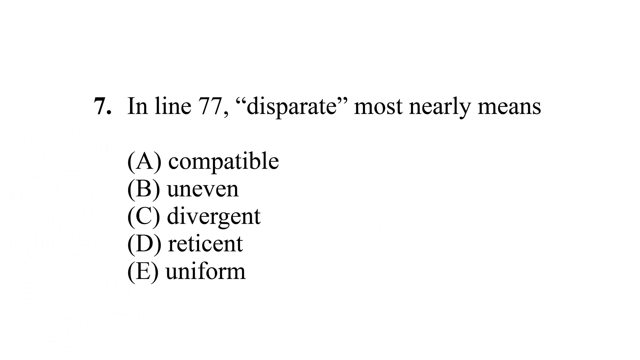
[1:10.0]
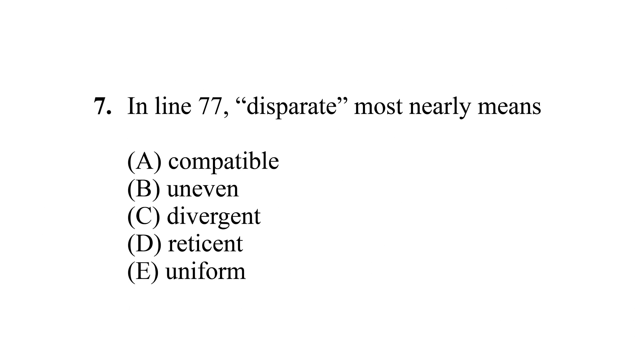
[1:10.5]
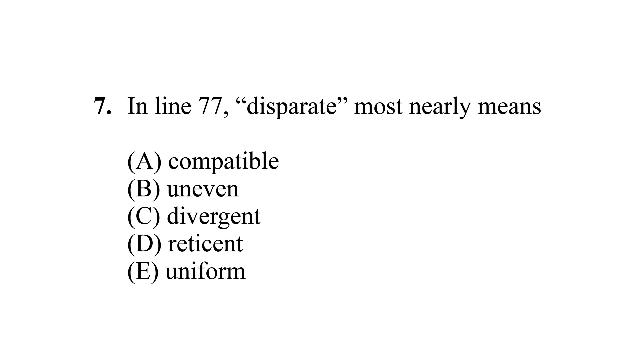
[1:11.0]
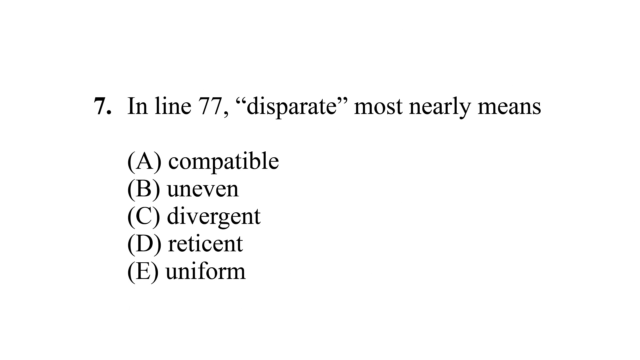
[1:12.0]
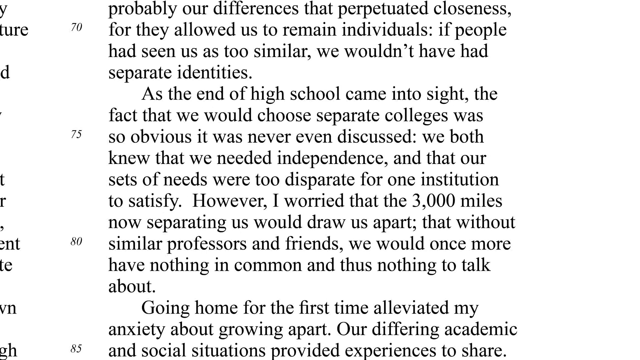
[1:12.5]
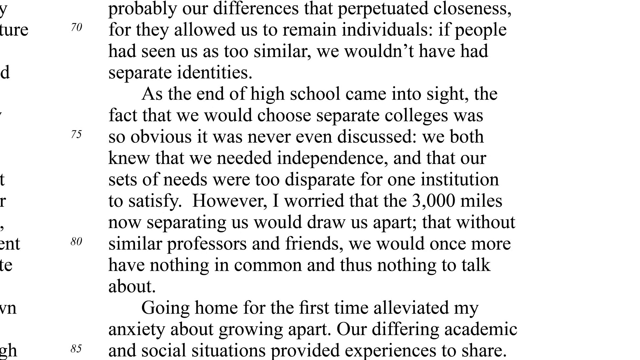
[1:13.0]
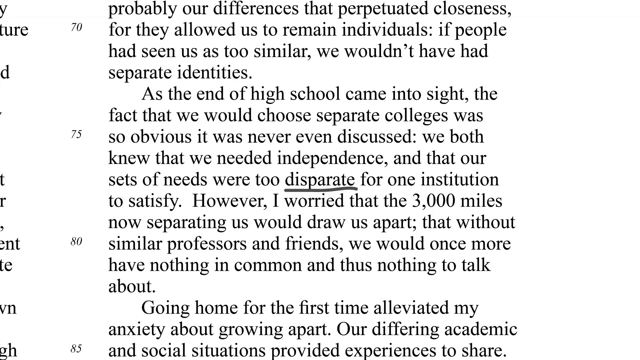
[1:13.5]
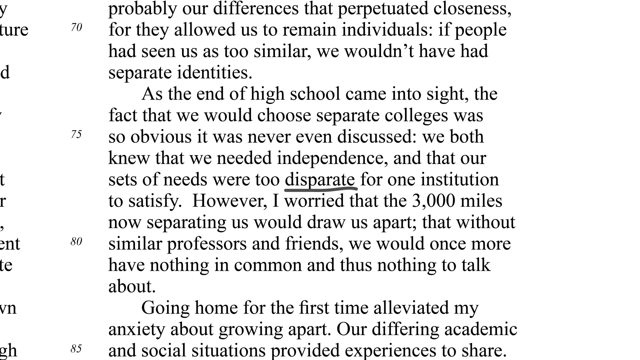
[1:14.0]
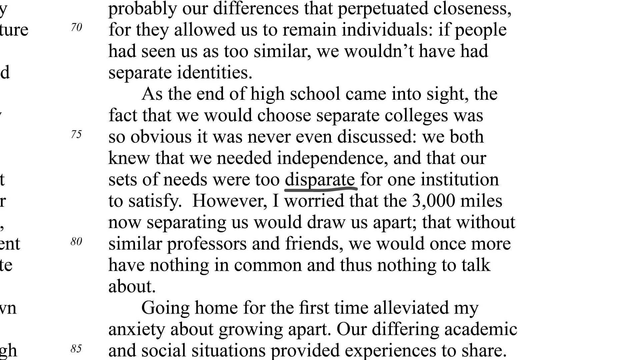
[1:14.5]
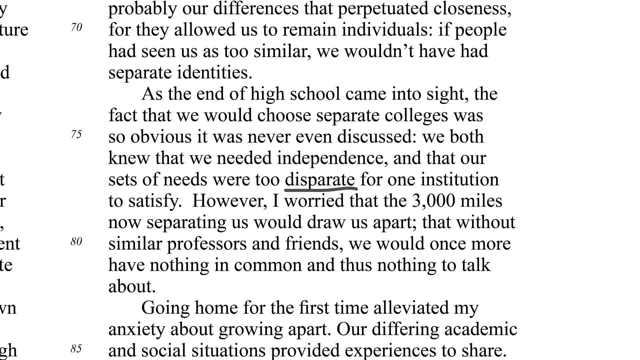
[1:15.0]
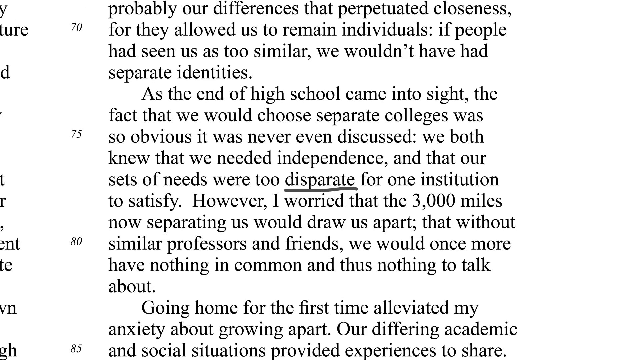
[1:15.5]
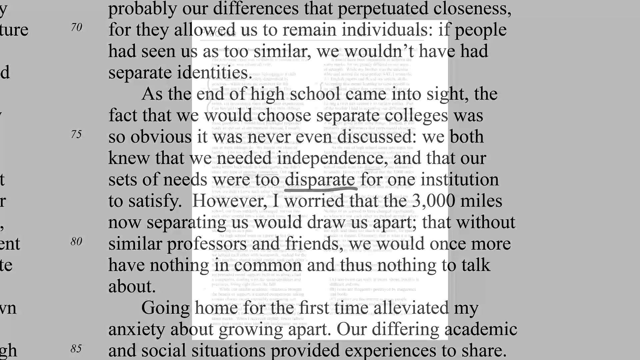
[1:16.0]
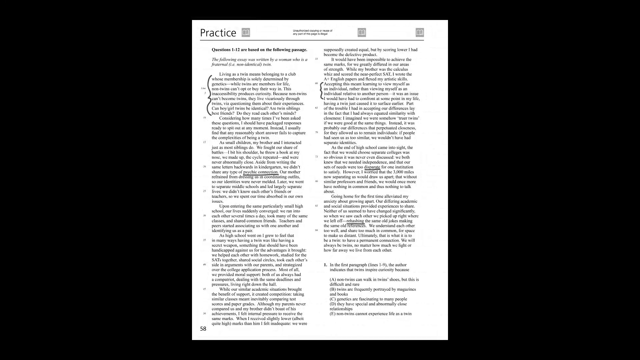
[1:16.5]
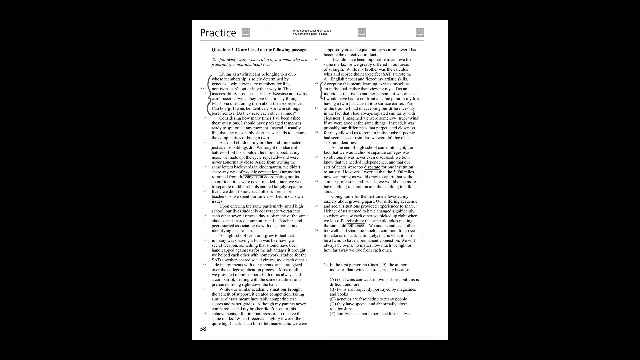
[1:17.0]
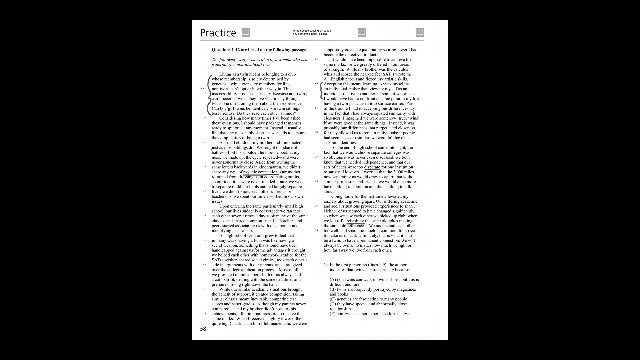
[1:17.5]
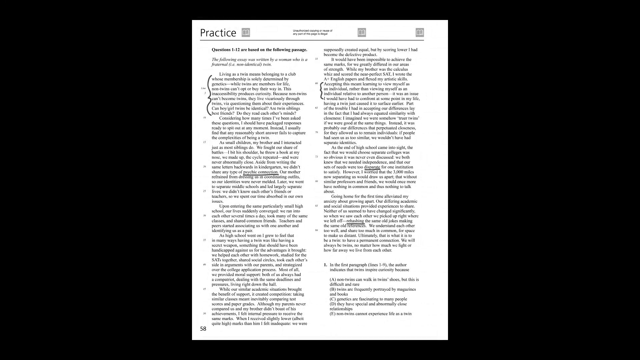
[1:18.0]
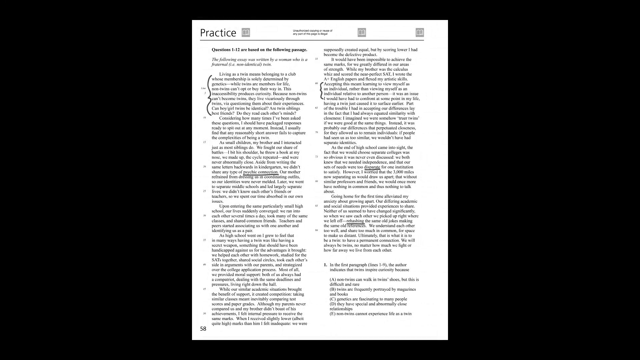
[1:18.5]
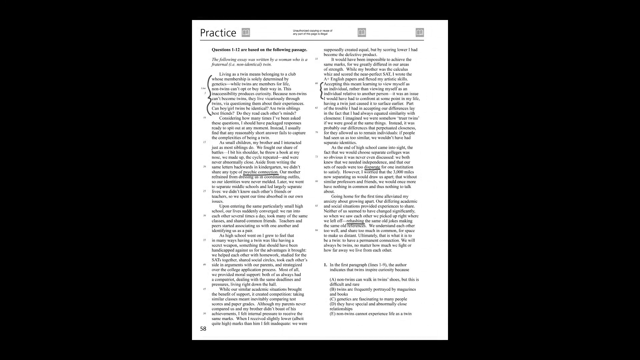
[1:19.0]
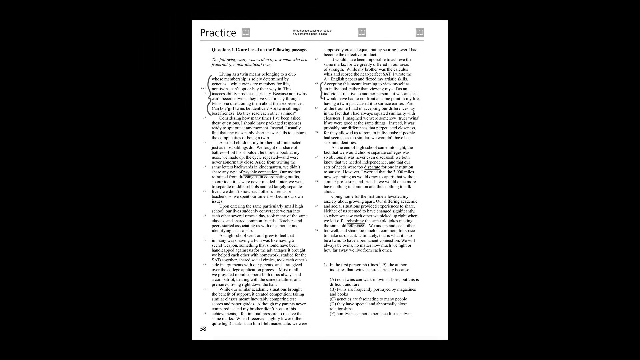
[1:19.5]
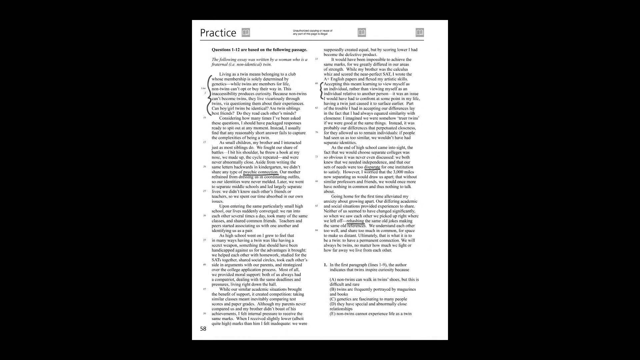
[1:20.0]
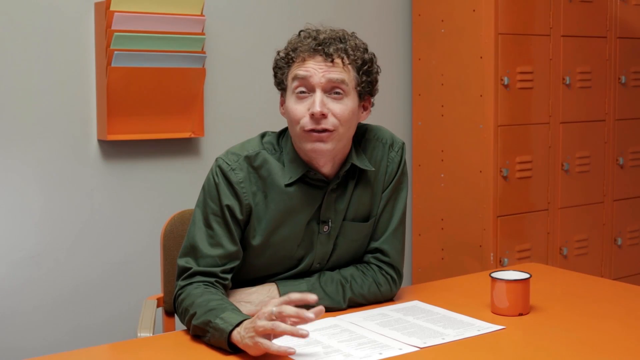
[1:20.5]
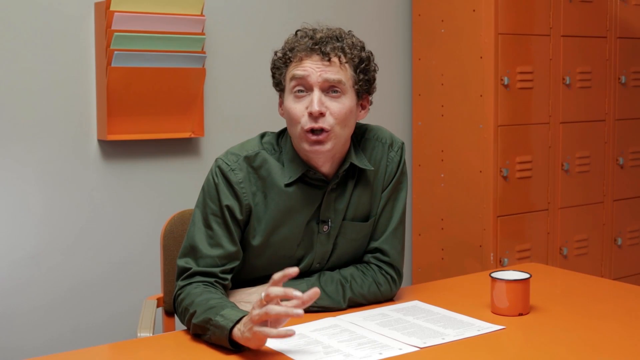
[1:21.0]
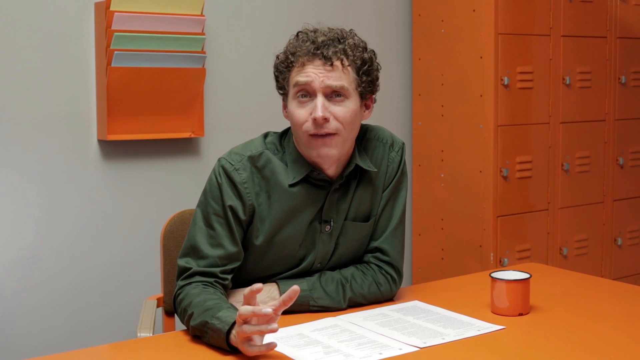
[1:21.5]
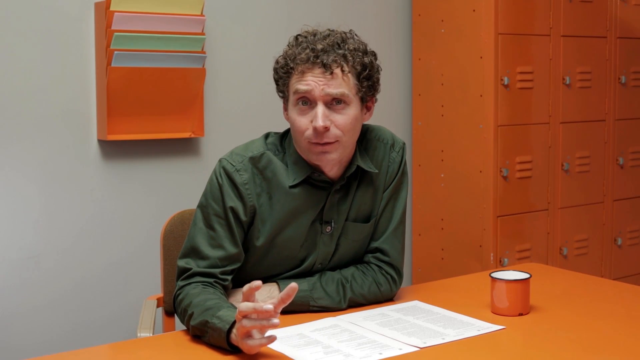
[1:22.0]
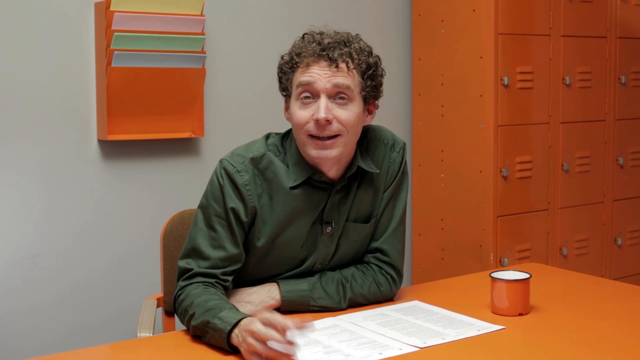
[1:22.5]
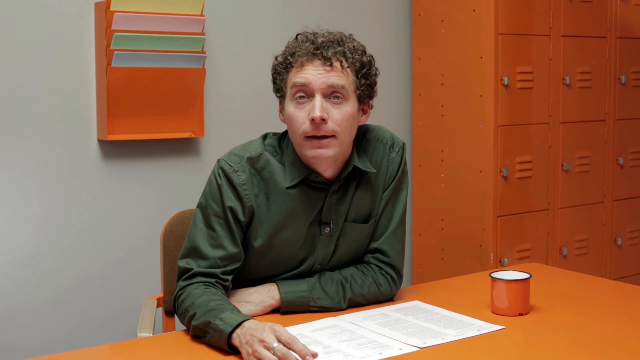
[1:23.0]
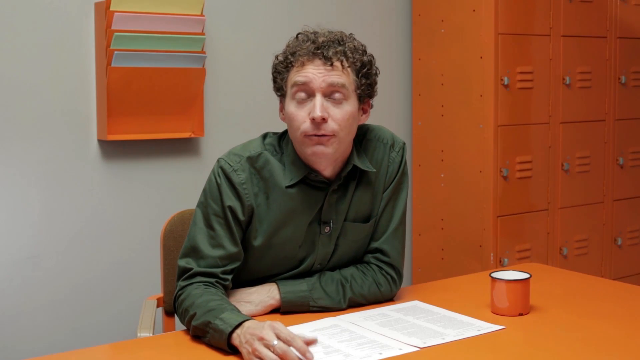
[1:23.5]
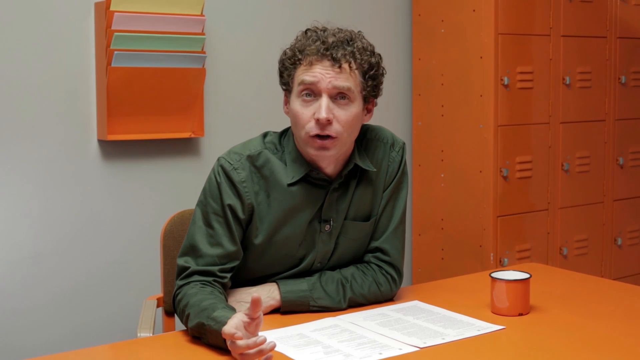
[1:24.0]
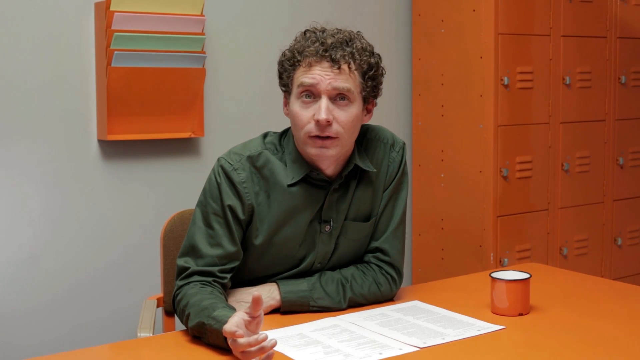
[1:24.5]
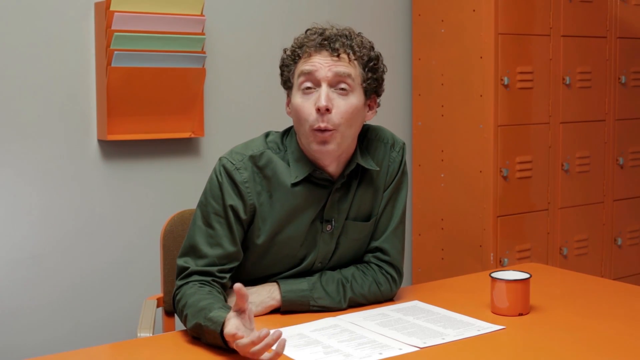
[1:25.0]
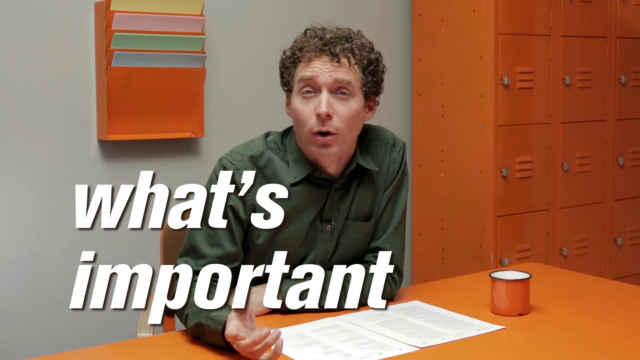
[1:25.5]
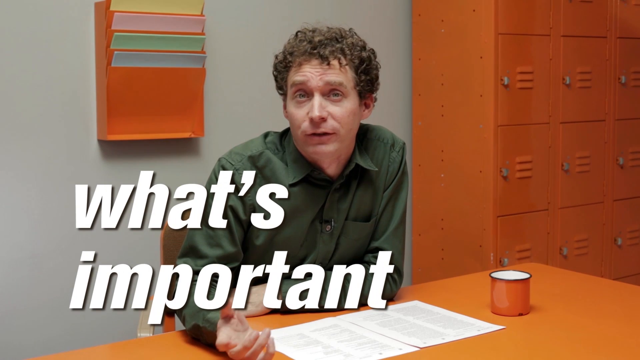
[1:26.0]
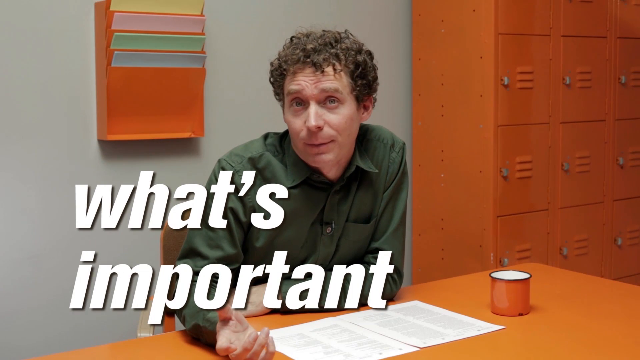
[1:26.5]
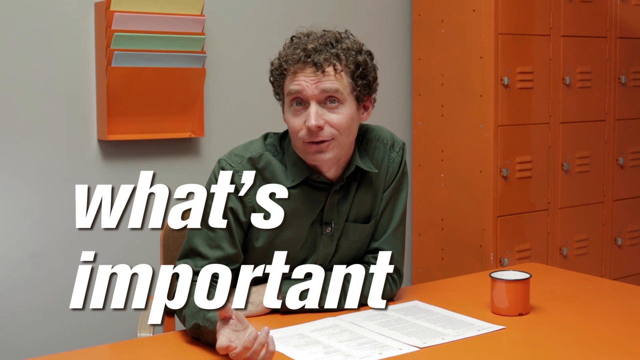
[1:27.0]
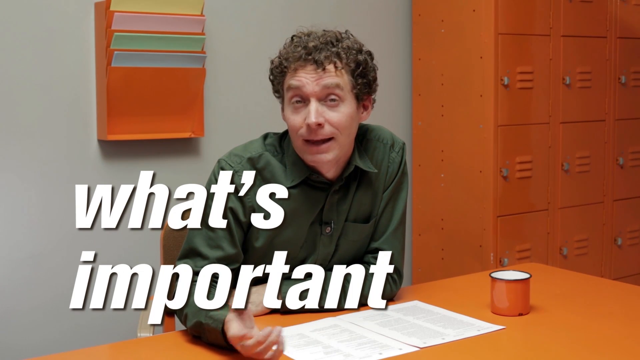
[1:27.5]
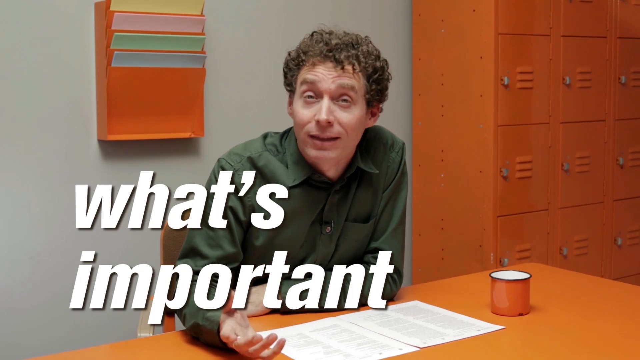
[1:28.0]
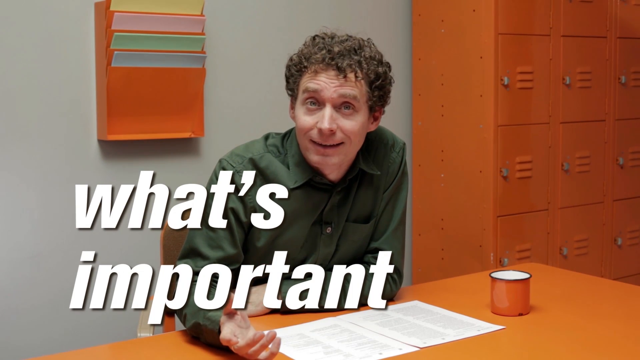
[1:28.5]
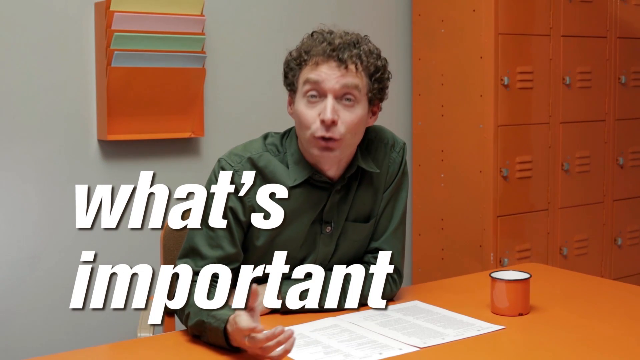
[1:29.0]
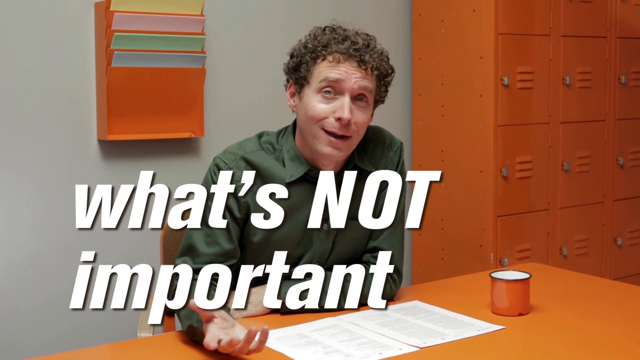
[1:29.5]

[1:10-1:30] Text appears on a white background, looking like a zoomed-in section of a document. It reads "7, in line 77, disparate, most nearly means, A, compatible, B, uneven, C, divergent, D, reticent, E, uniform." A different section of the document follows, showing one column of text with the word "desperate" underlined. The view zooms out to the full document, a single digital sheet of white paper on a black background with two columns and "practice" at the top; a couple of sections are annotated and underlined, with some squiggles on the side. The scene then switches to a man talking while sitting at a desk in a room with white walls. He is white and clean-shaven, with short brown curly hair, and wears a green long-sleeved button-up shirt. On the right is a locker storage unit with 12 orange lockers visible. Behind him, a file folder storage unit mounted to the wall holds various sheets of different colored paper. On the desk are an orange mug and two sheets of paper with columned text. He talks with his arms resting on the desk, gesturing with his hand. Large white text appears on the screen reading "what's important", and then the word "not" appears after "what's", making the text read "what's not important".